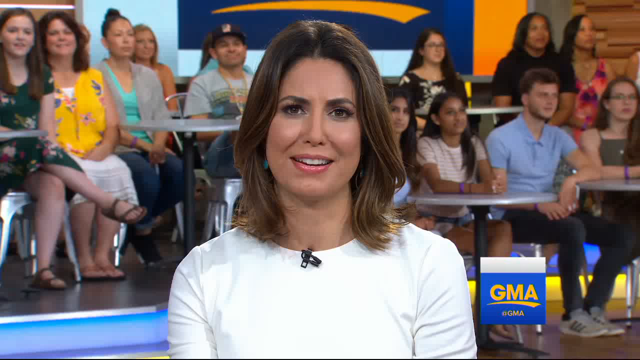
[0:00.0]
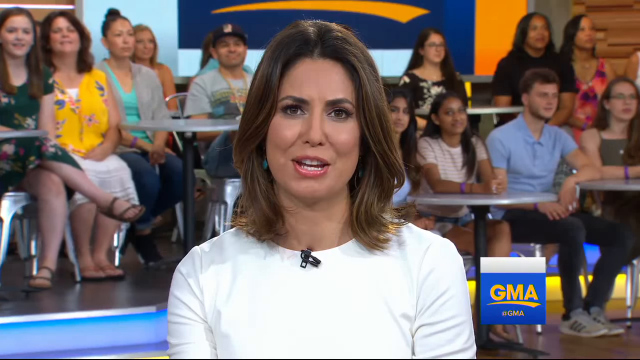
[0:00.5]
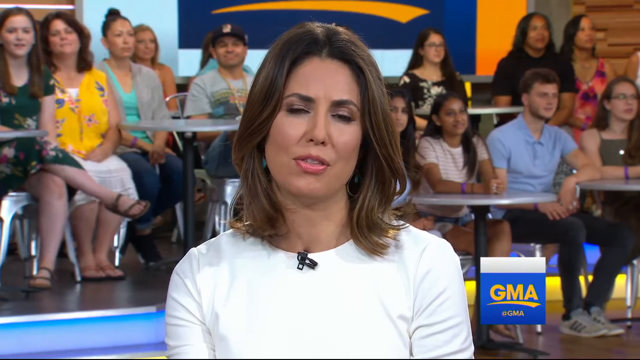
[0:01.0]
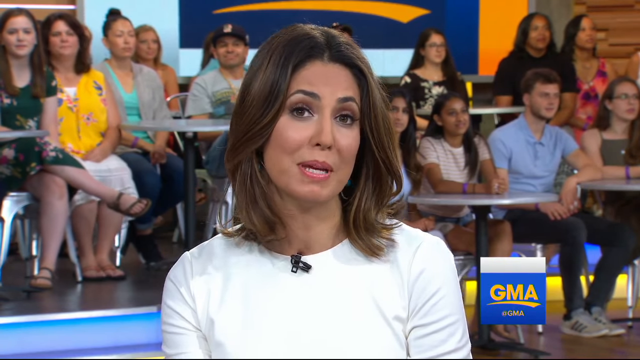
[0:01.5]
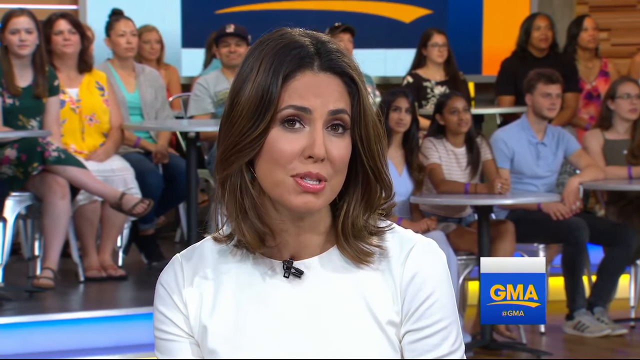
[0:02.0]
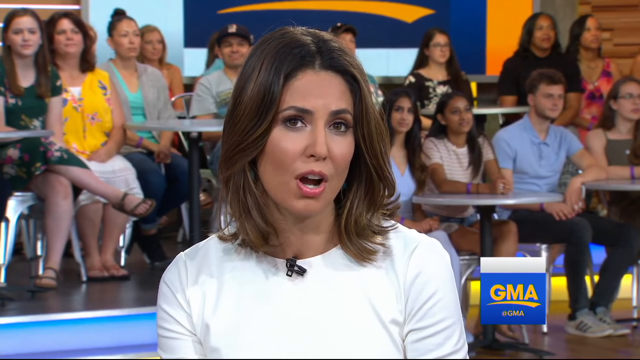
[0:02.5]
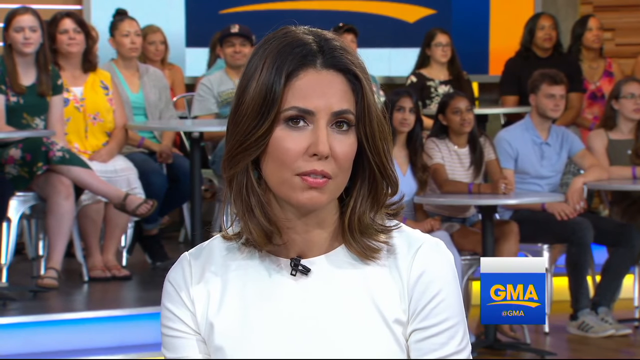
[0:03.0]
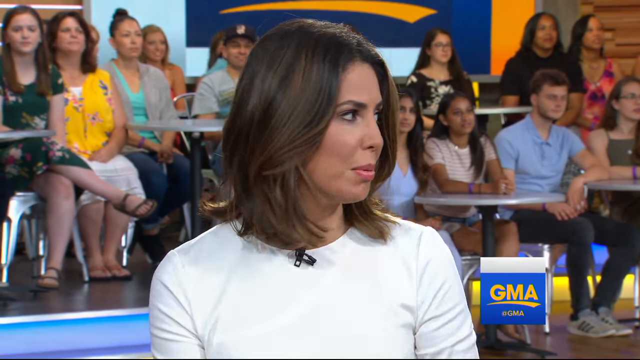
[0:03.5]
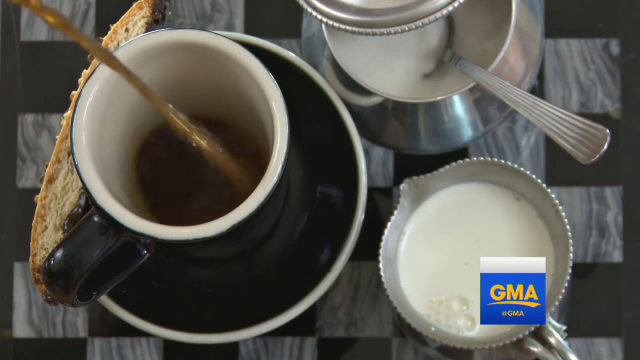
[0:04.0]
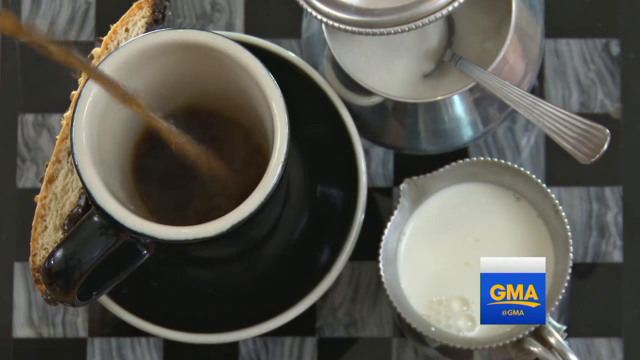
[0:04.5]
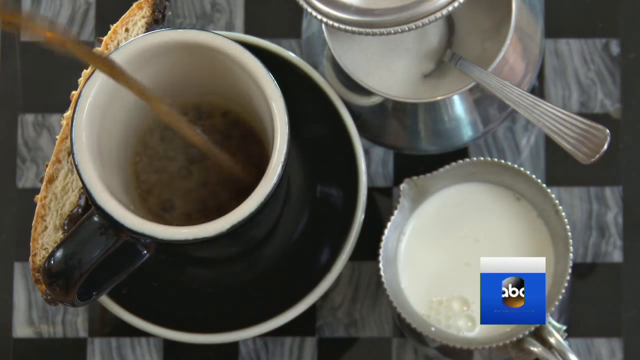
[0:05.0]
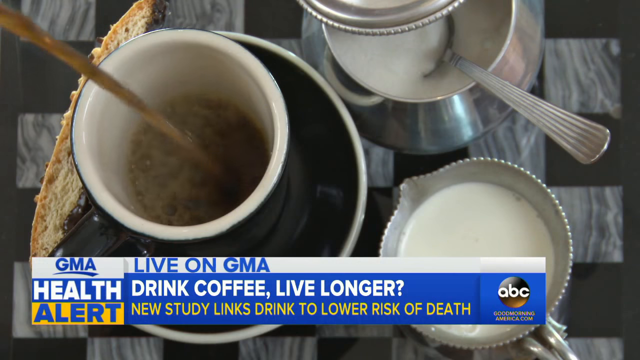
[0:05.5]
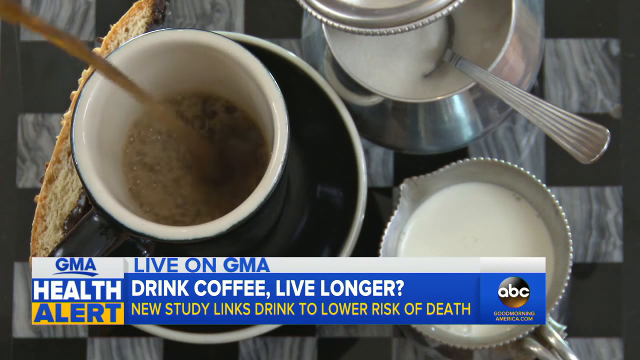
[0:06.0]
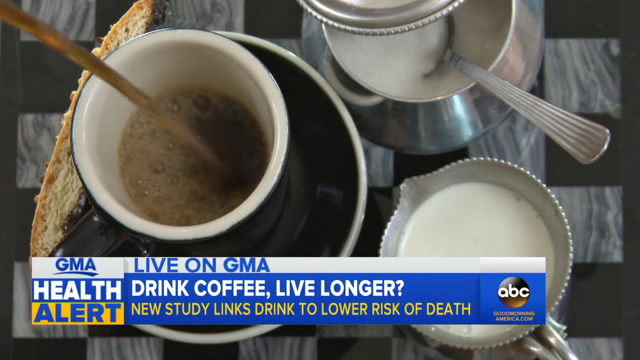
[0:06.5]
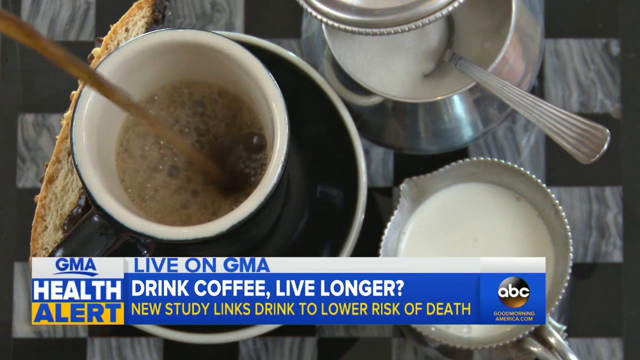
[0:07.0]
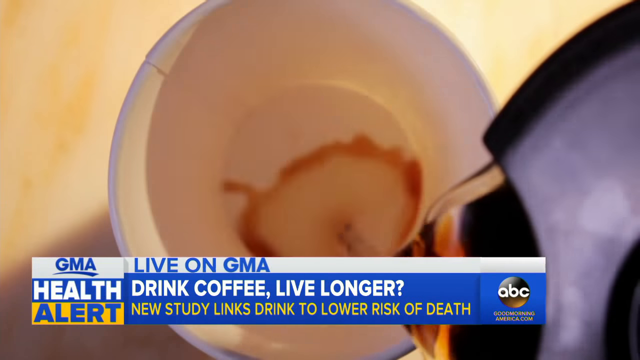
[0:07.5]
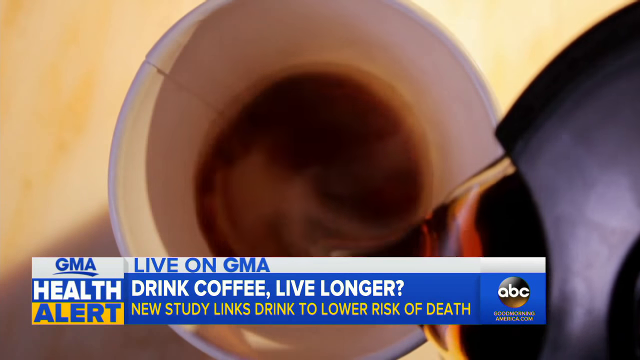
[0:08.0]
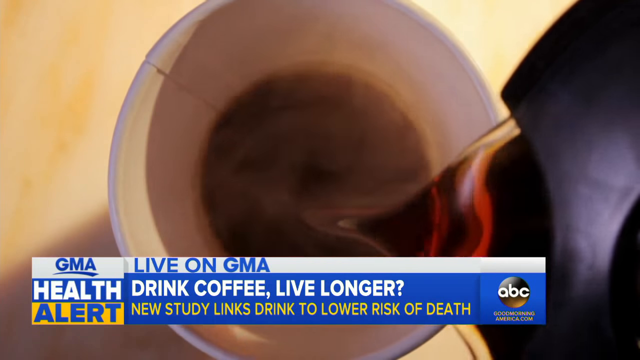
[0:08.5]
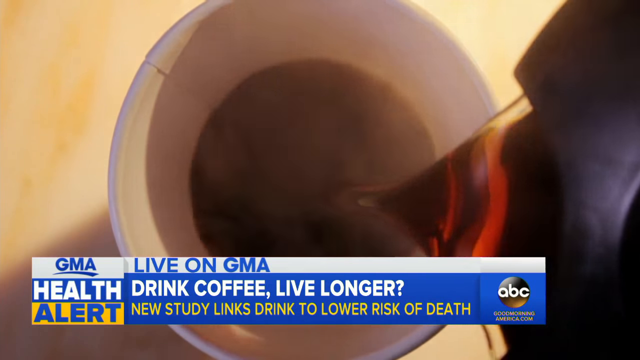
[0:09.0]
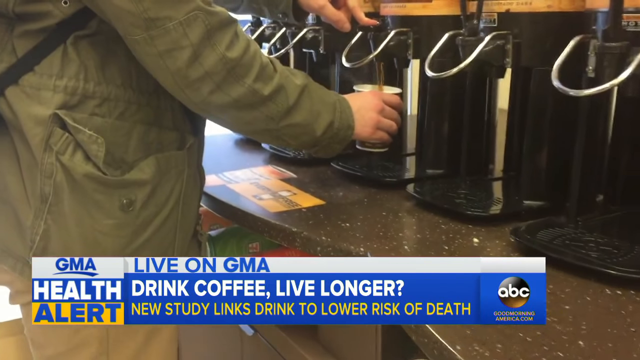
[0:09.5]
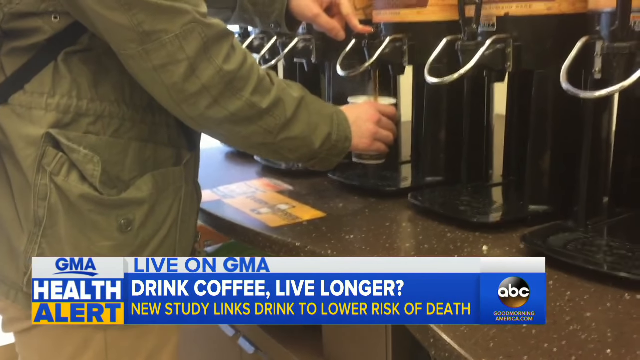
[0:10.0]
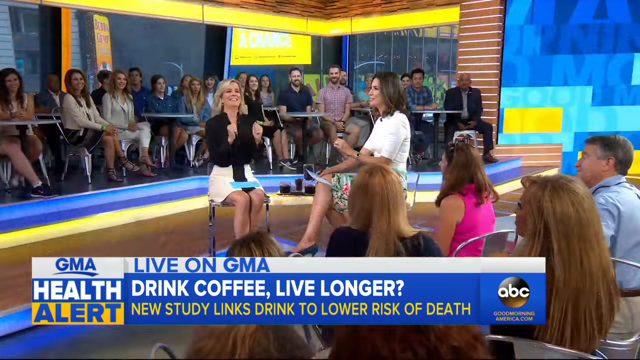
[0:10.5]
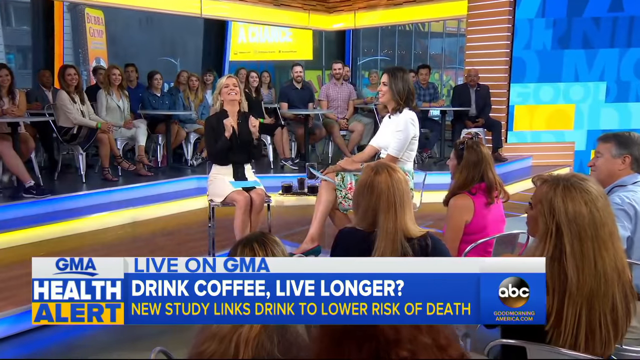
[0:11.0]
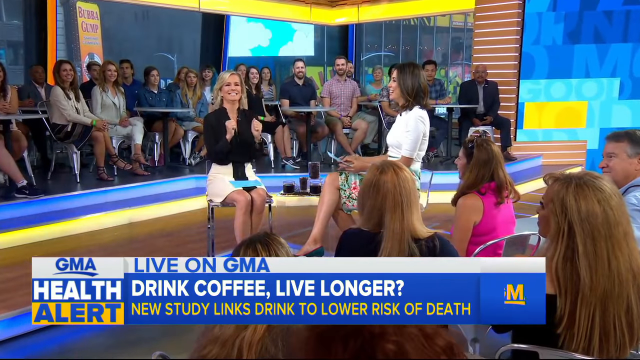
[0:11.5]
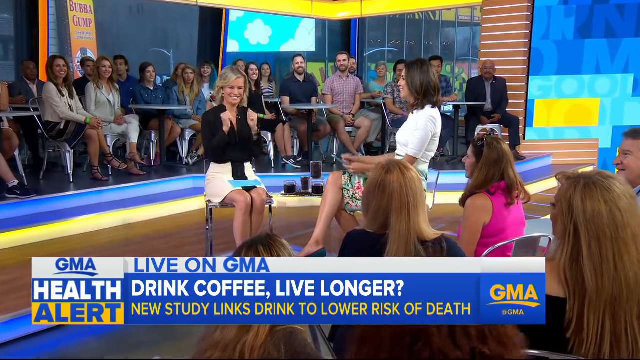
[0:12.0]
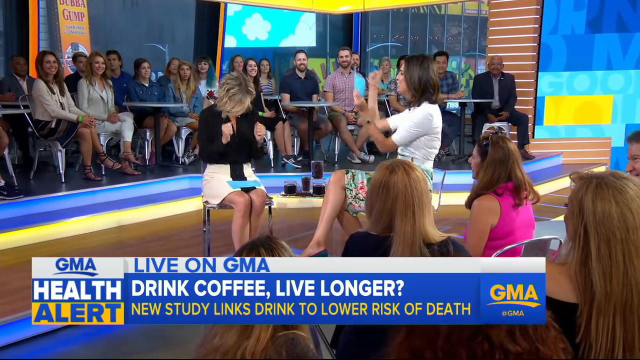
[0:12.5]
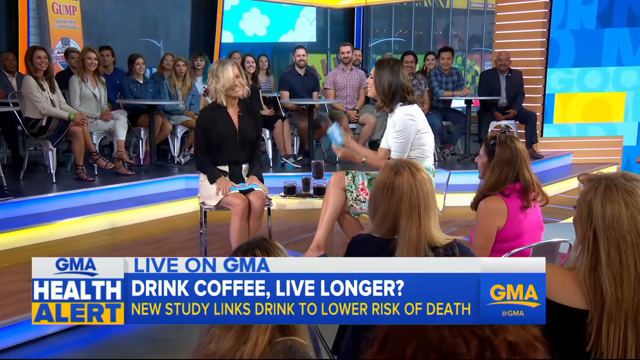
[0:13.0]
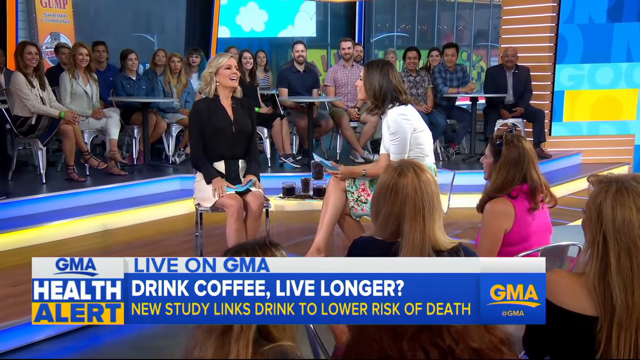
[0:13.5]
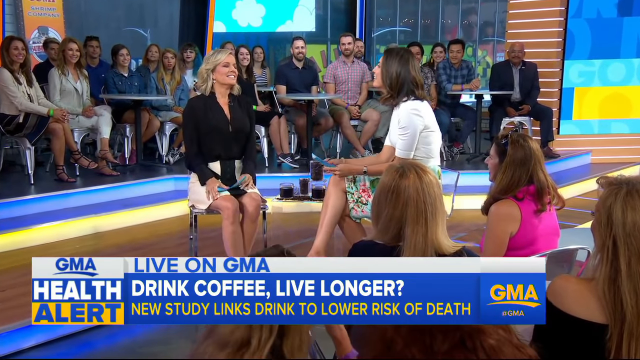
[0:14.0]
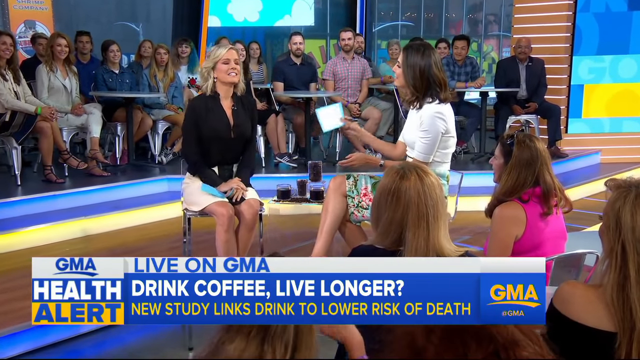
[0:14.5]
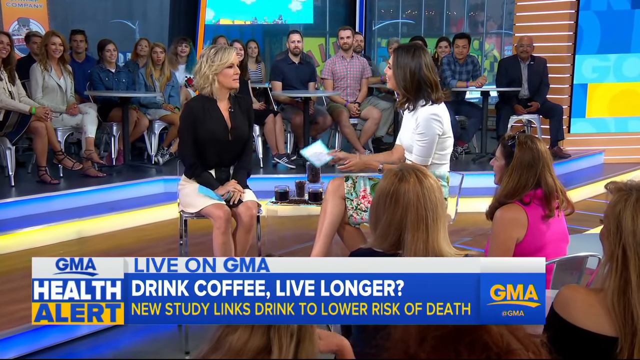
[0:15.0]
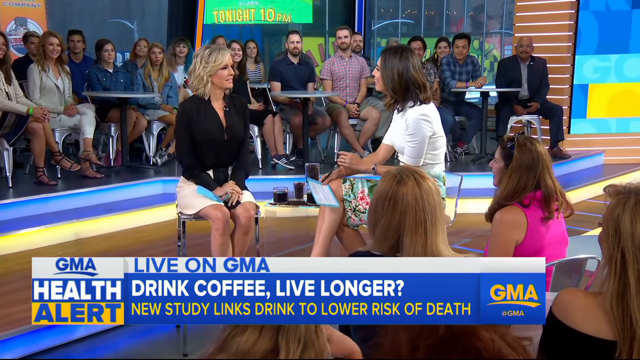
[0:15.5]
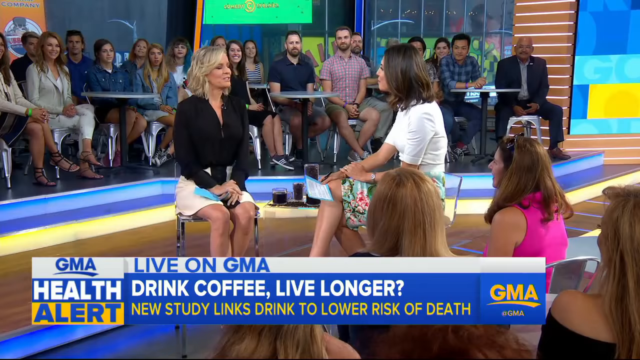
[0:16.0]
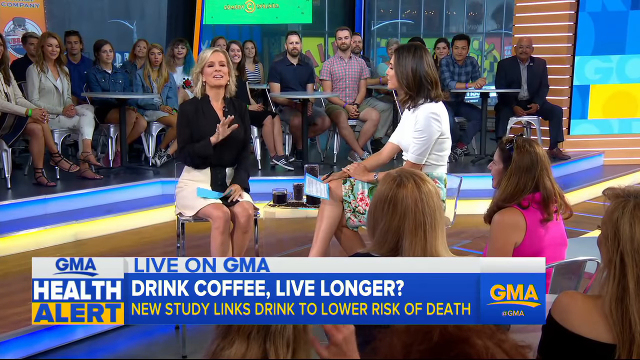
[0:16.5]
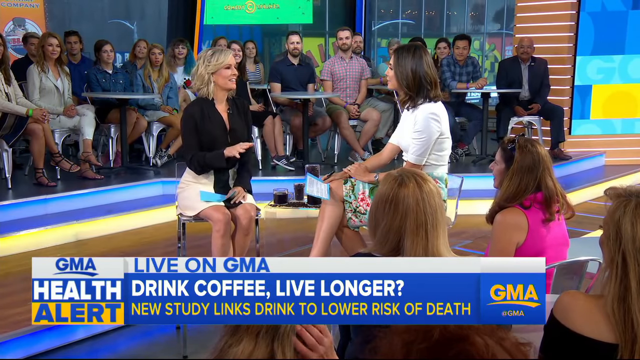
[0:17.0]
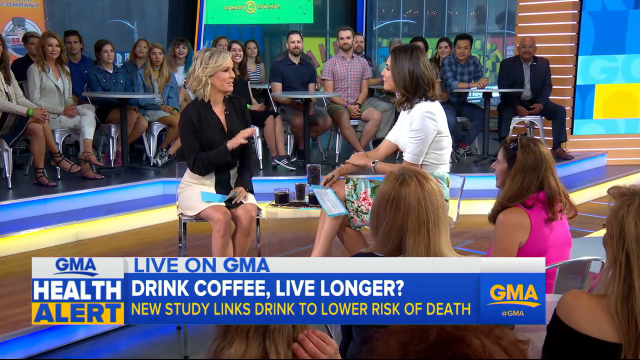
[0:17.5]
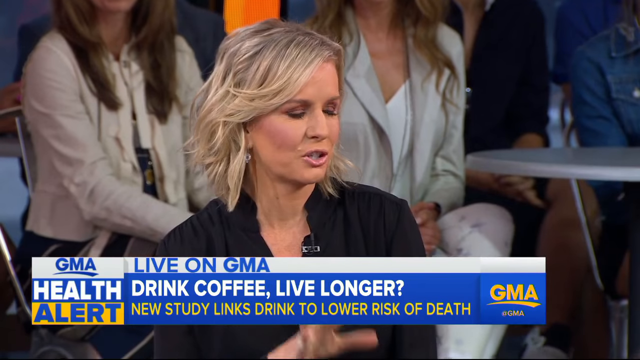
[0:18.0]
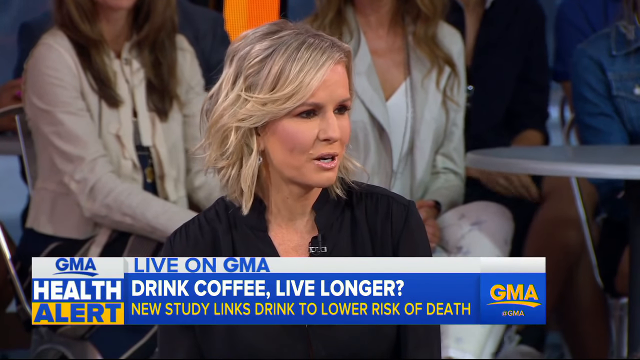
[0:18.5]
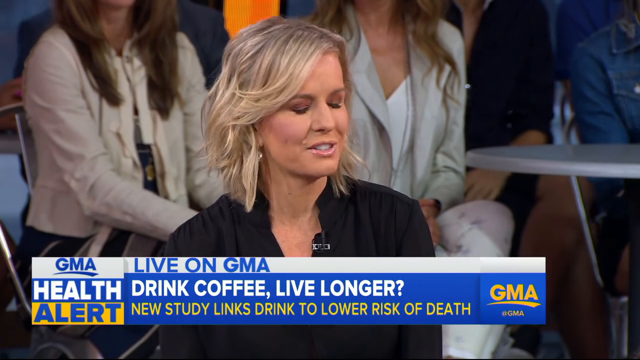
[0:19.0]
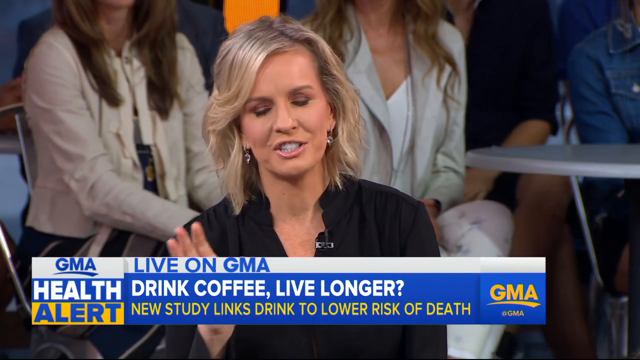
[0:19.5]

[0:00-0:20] A woman with brown hair wears a white top and has a small microphone on her chest. In the background are people of different genders wearing different colors of clothing. She is a presenter on GMA Health Alert. The video cuts to coffee being poured into a cup, and sugar and milk are also shown. On a blue background, text reads "drink coffee, live longer", and yellow text reads "new study links" and "lower risk of death", along with "ABC". The presenter then speaks with a woman who wears a black top and has white hair, and the two hold a question-and-answer session. Apparently more than 20 people, possibly more than 50, are in the audience.